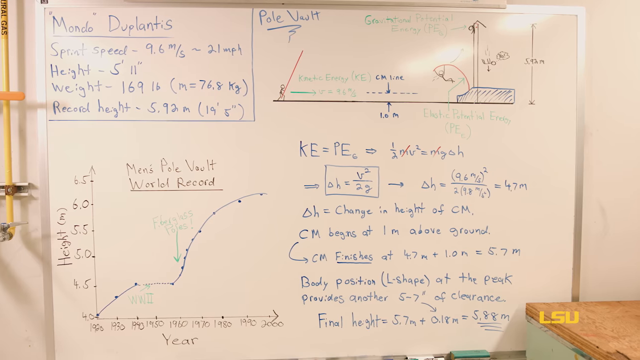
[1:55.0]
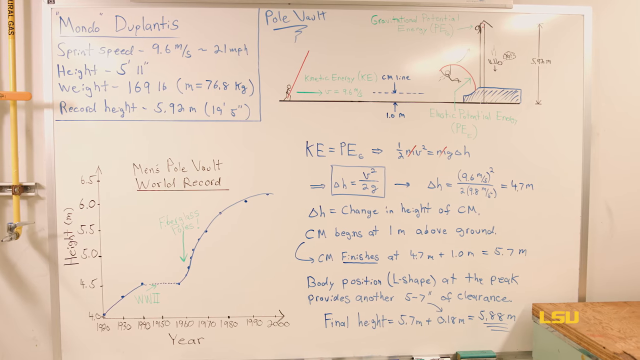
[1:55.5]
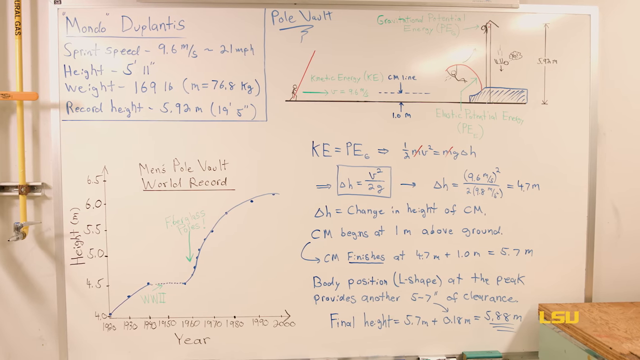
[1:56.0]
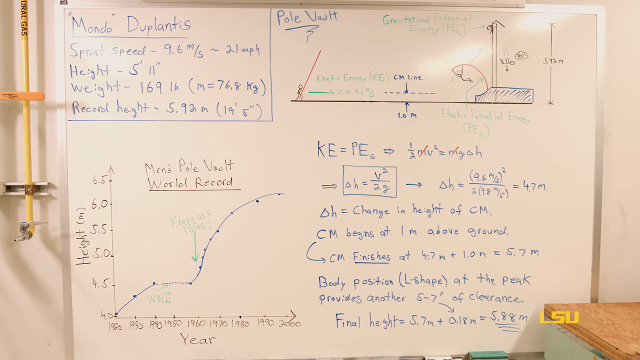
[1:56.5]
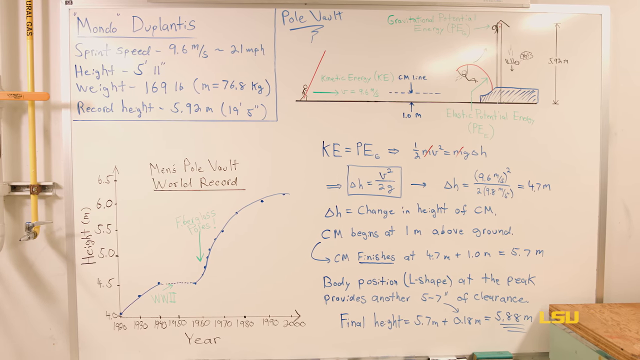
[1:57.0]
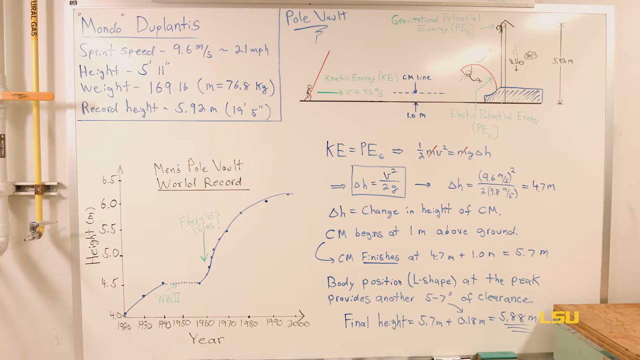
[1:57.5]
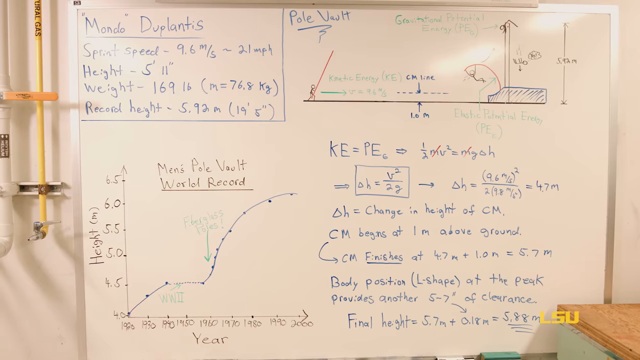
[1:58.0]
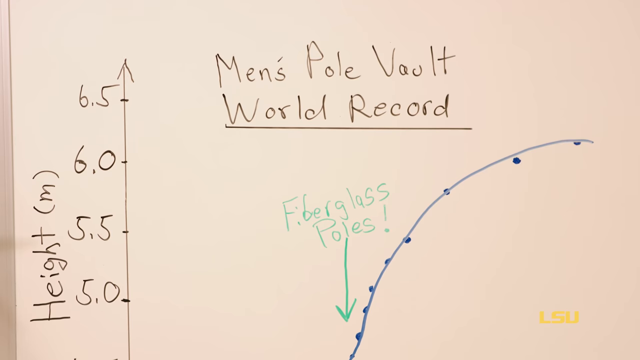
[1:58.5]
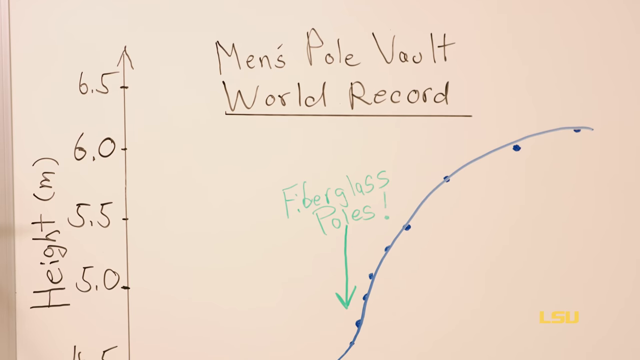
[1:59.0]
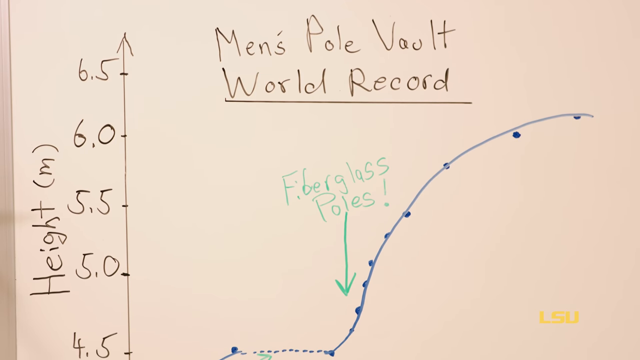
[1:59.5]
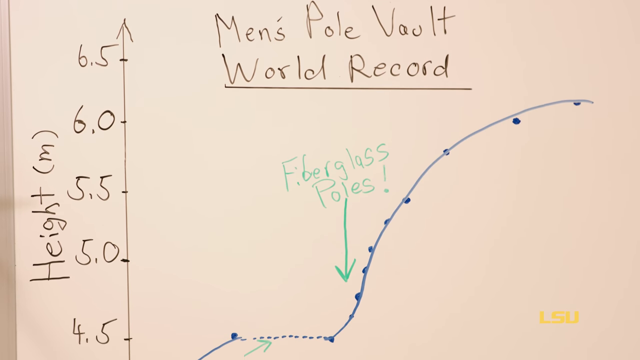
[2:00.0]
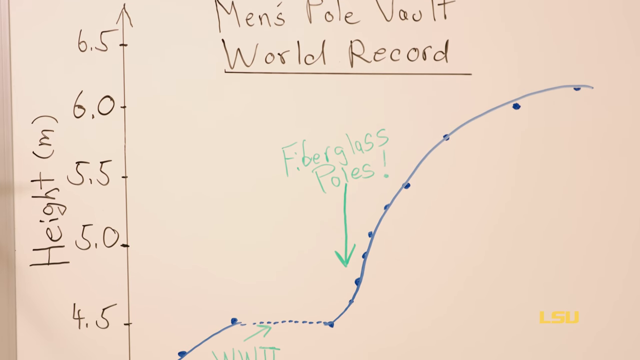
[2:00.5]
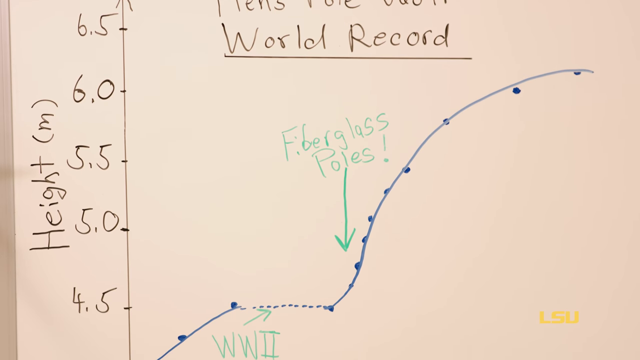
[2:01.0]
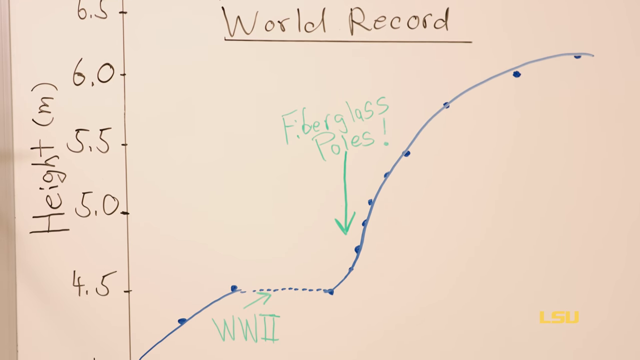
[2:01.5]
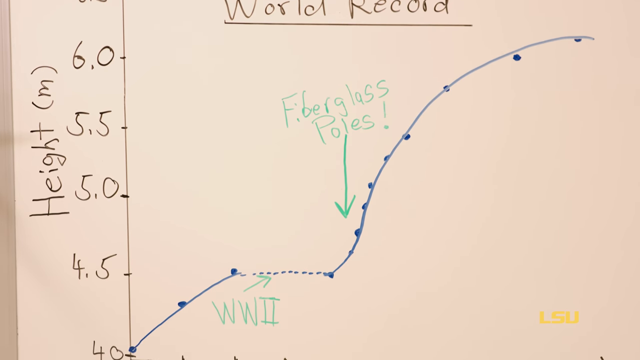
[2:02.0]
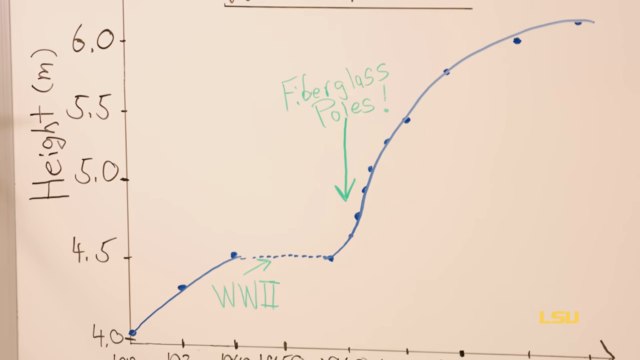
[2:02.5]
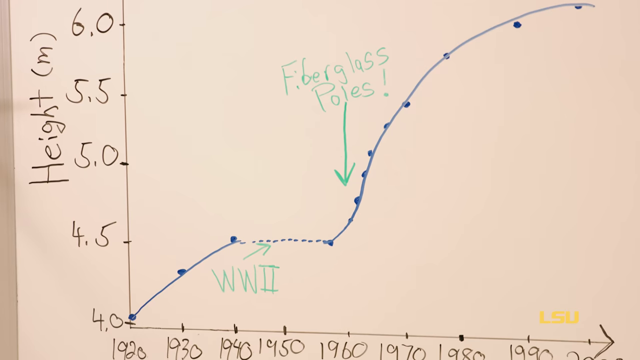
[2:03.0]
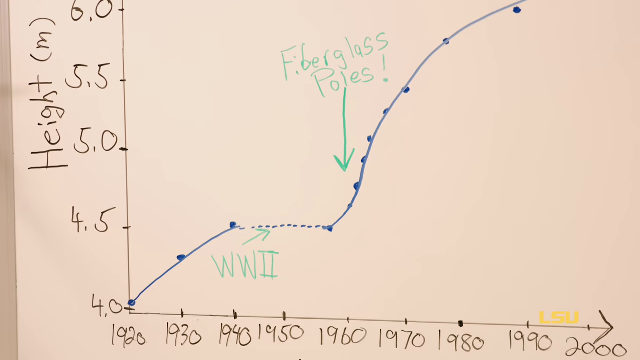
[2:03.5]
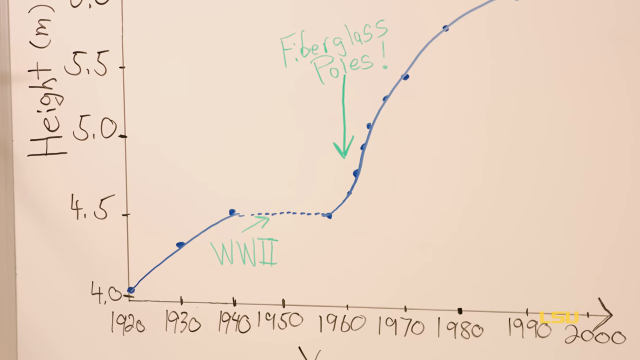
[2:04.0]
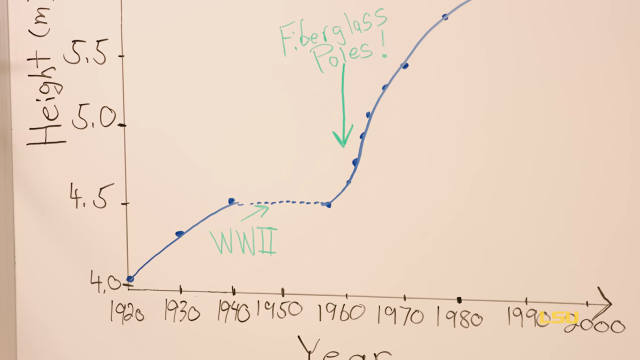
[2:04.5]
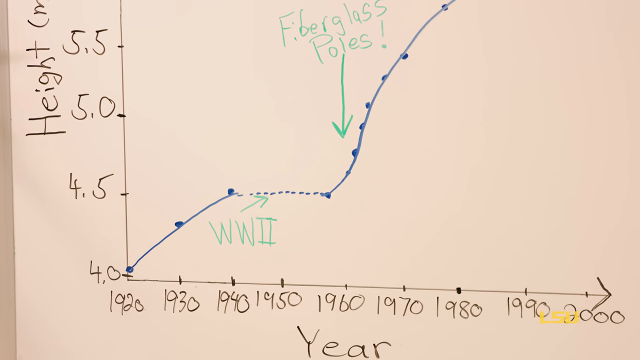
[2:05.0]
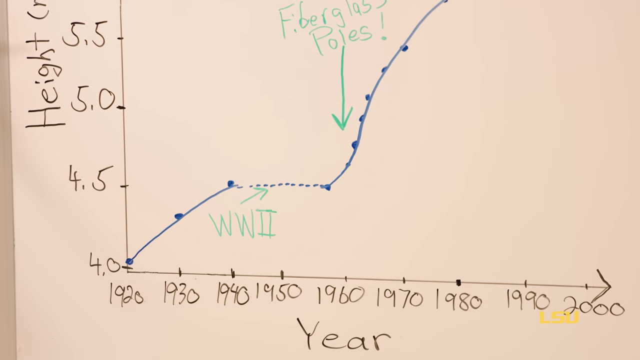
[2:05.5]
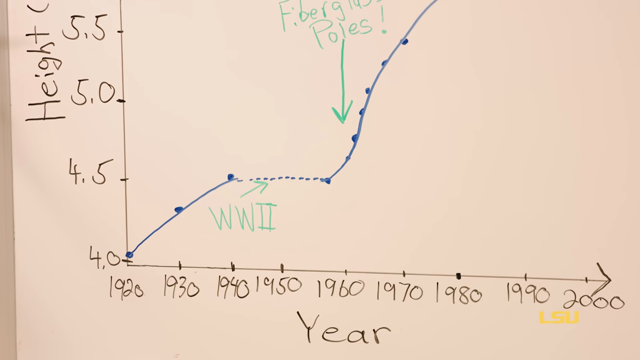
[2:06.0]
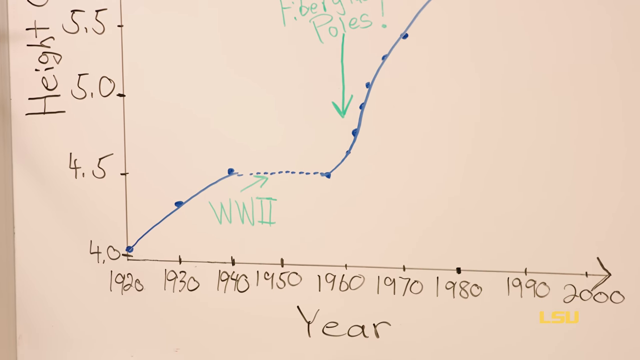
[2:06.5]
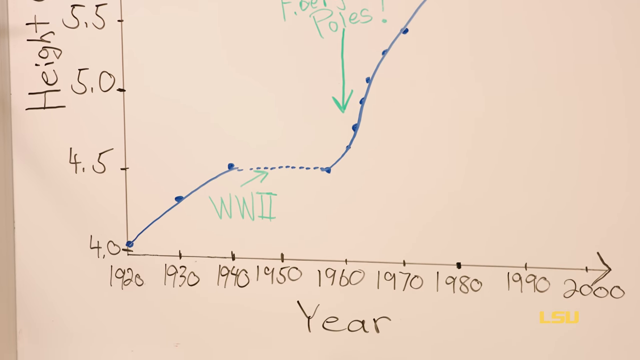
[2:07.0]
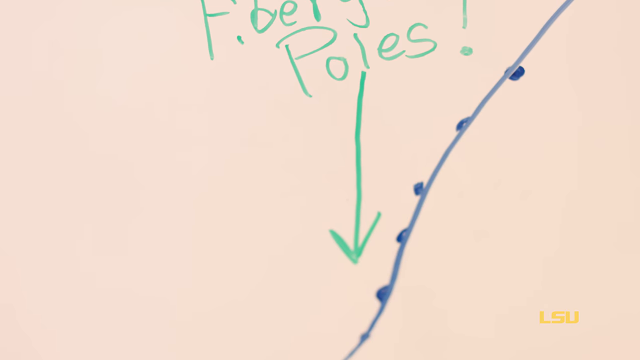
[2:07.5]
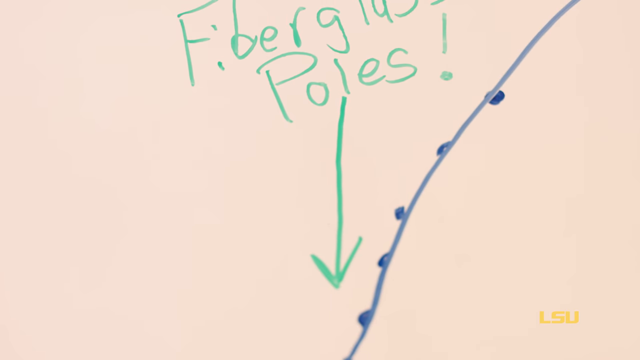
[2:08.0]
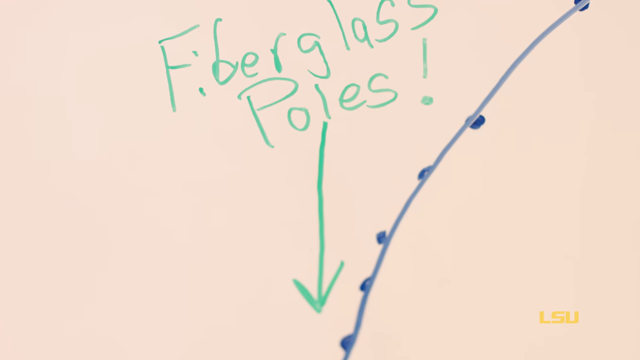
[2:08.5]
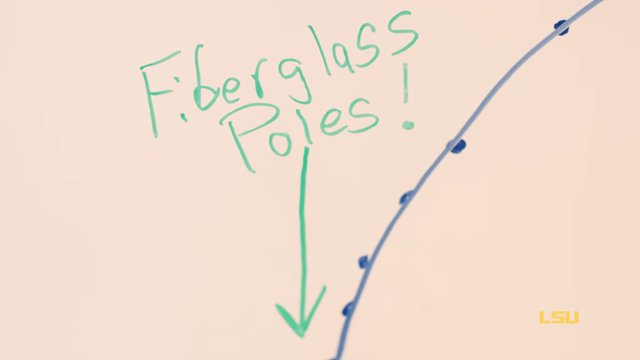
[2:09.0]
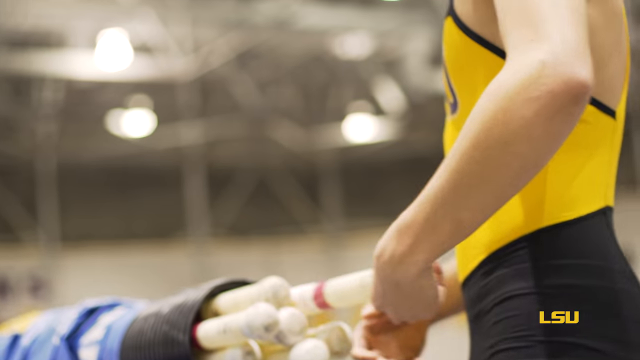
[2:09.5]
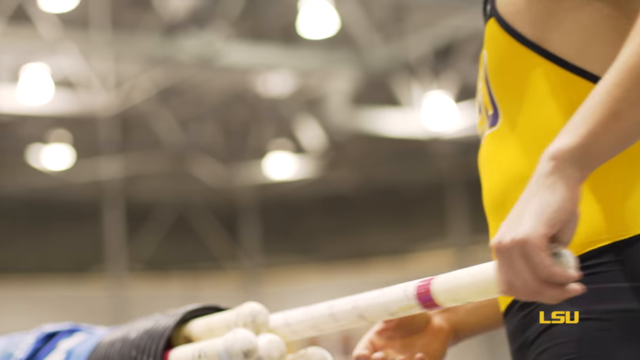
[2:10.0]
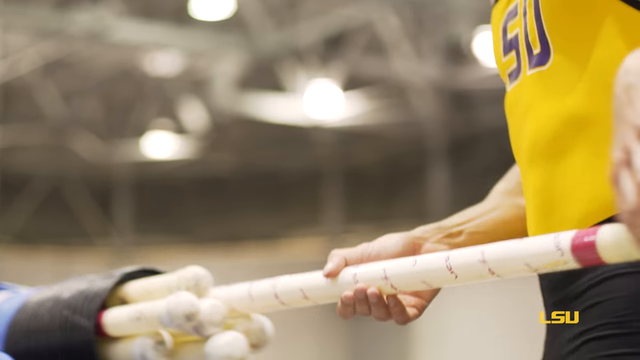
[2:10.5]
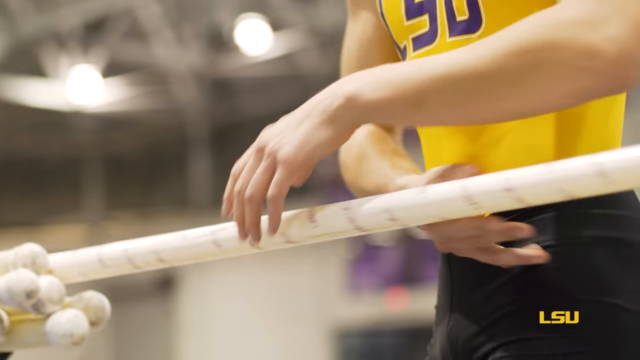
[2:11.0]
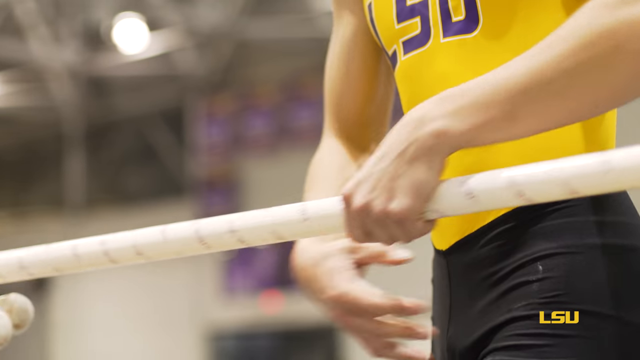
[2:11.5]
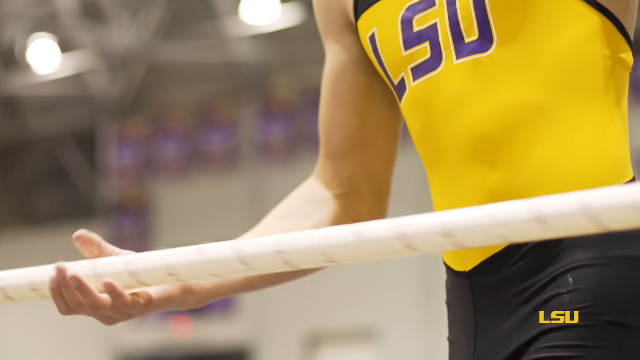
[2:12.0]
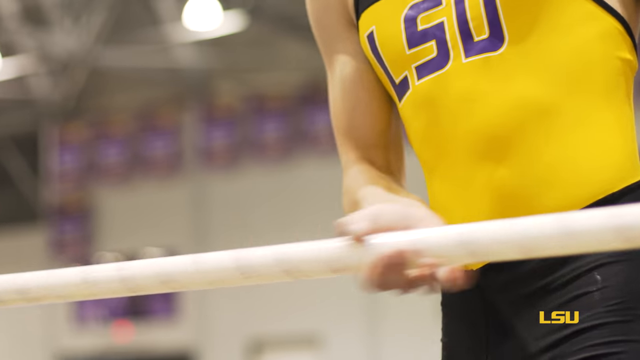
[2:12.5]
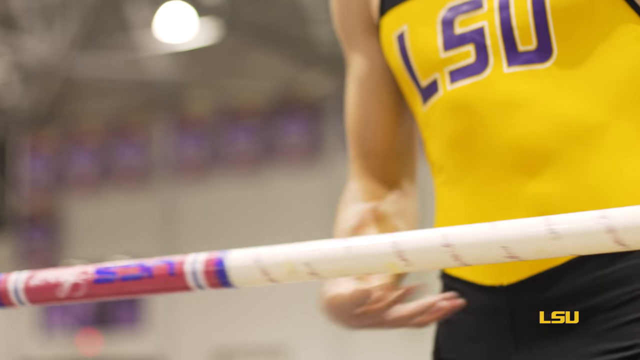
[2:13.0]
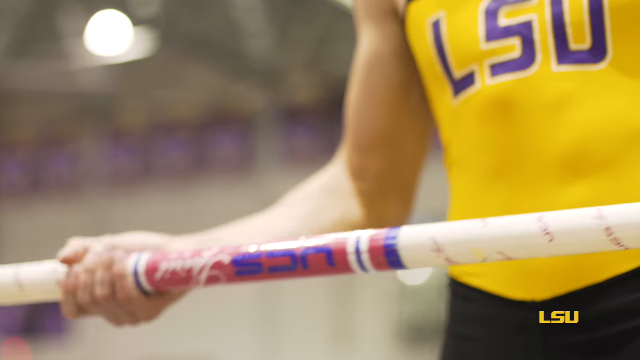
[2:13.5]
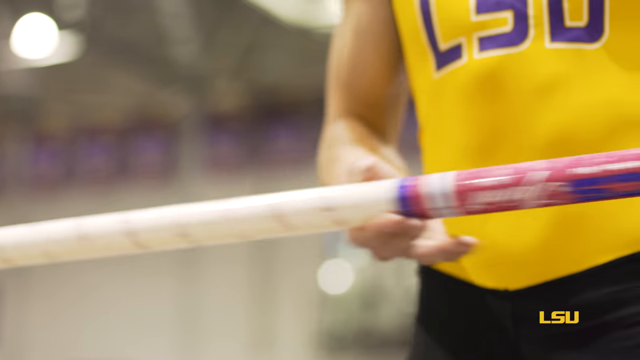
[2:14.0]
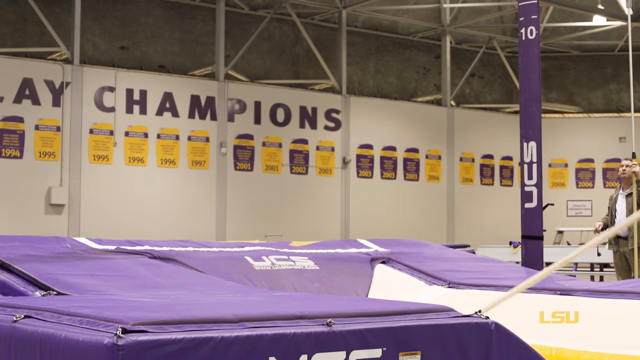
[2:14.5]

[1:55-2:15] The math continues with "KE = PE," the change in height of CM, "CM begins at 1 meter above ground," and "CM finishes at 4.7 meters + 1.0 meters = 5.7 meters," plus "Position is L-shaped at the peak, which provides another 5 to 7 inches of clearance." Close-up shots follow of how the men's pole vault record was done and the types of poles used, such as fiberglass poles. A history of pole vaulting is shown: in 1950 there was no record due to World War II, and in 1960 fiberglass poles were invented, leading to new height records. Close-ups then show the athlete pulling out a pole from the poles shown there; the pole is quite long and carries UCS labels.